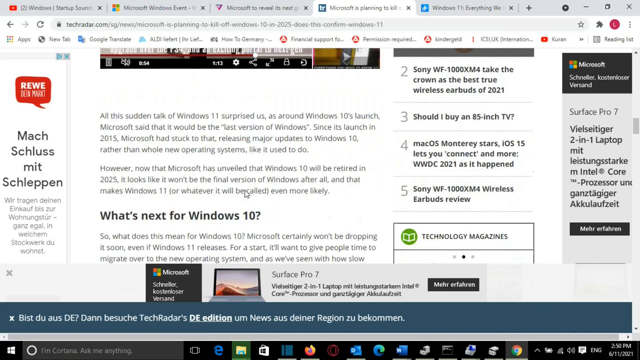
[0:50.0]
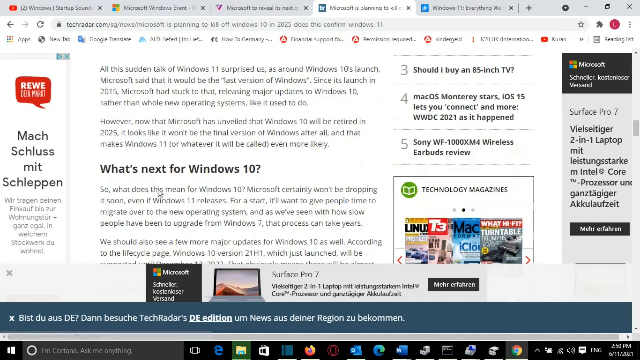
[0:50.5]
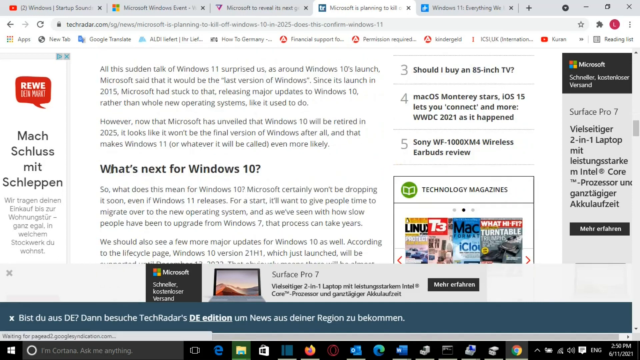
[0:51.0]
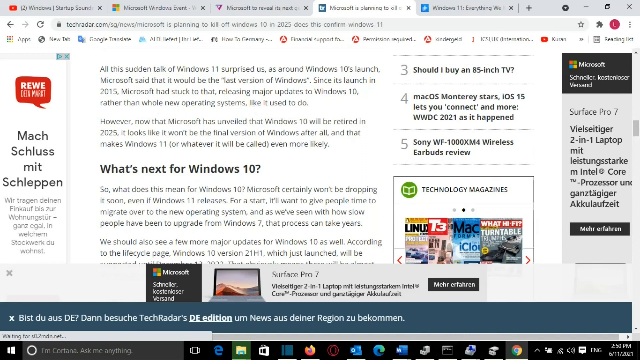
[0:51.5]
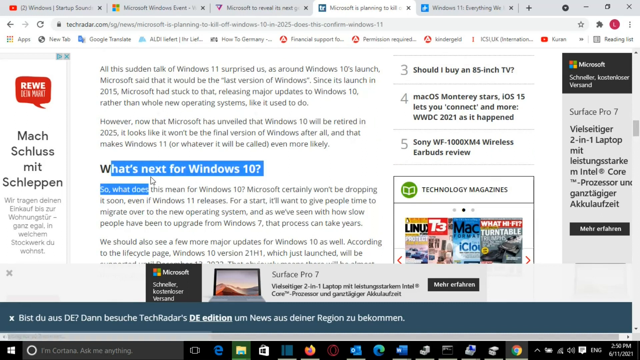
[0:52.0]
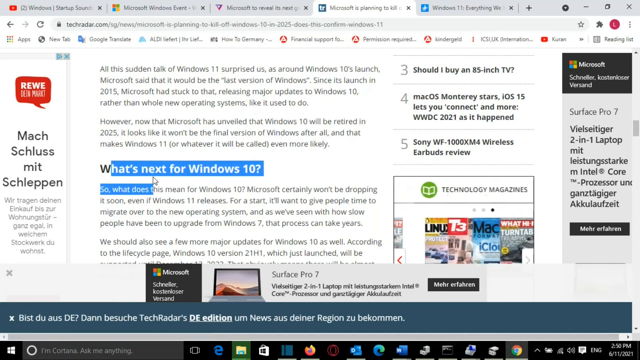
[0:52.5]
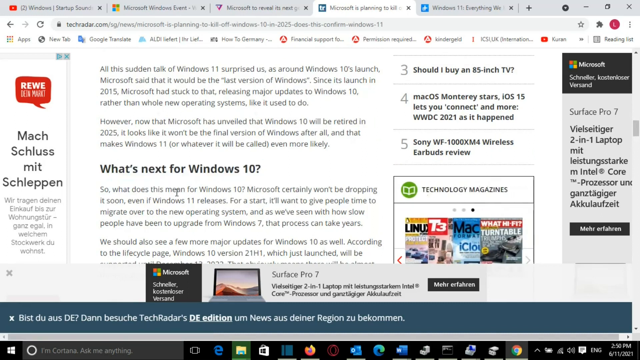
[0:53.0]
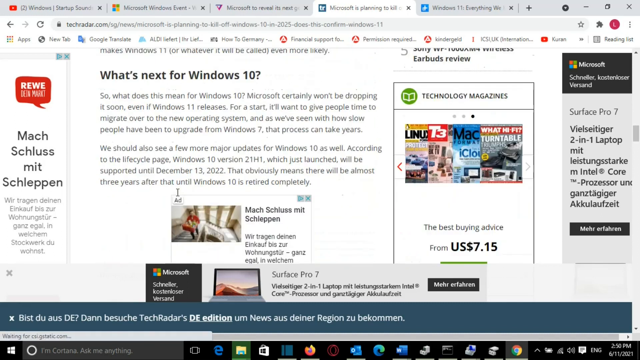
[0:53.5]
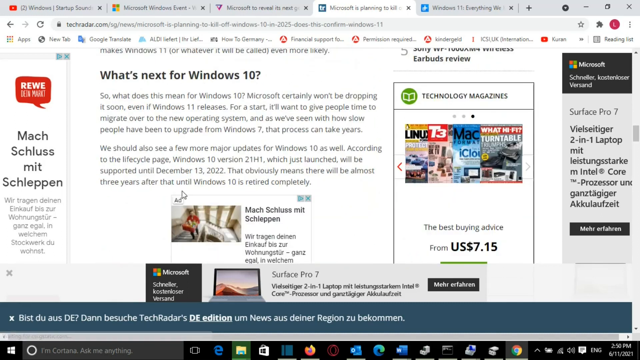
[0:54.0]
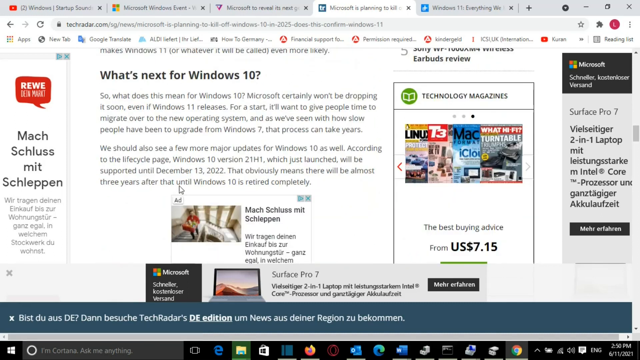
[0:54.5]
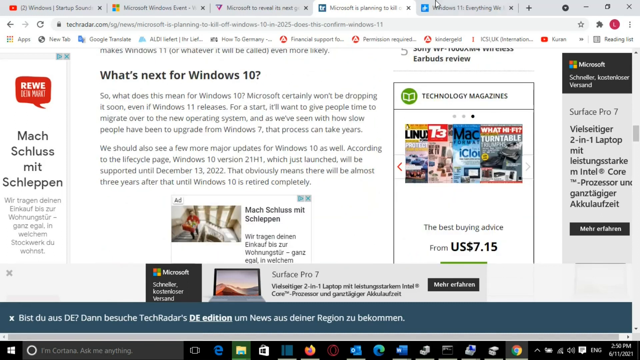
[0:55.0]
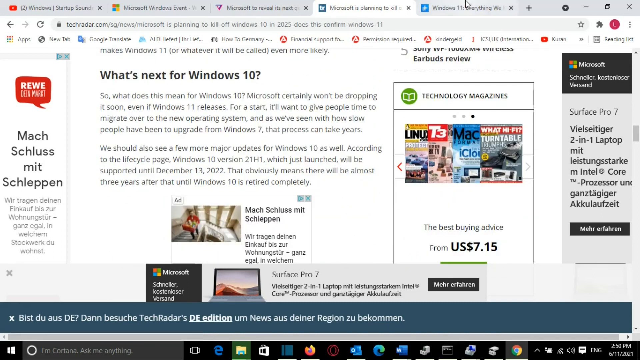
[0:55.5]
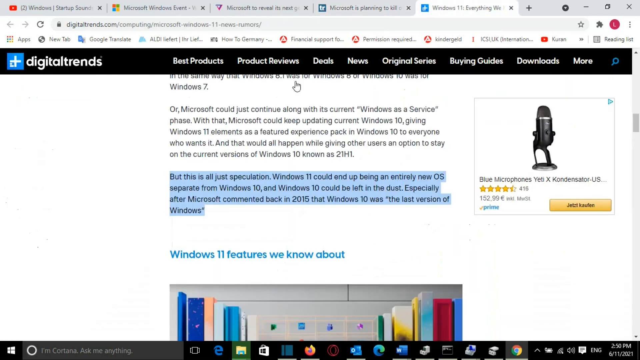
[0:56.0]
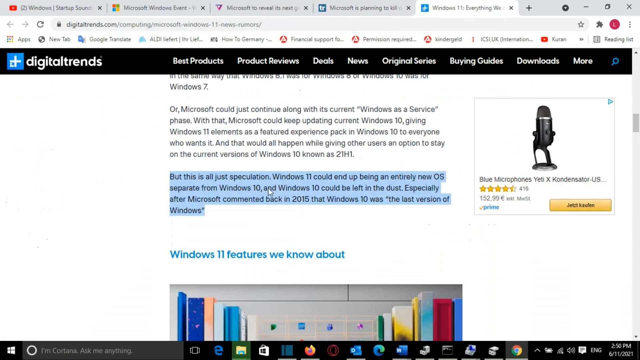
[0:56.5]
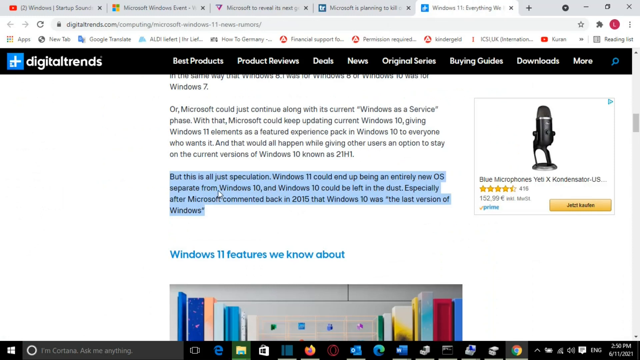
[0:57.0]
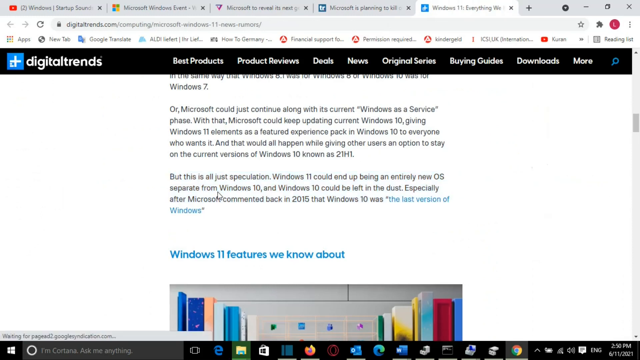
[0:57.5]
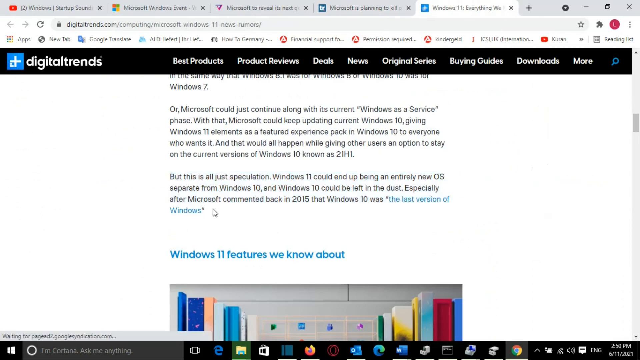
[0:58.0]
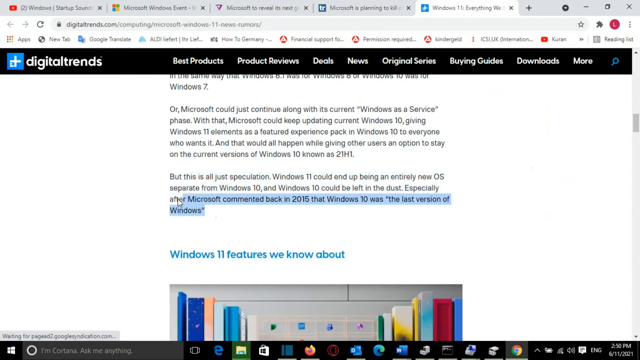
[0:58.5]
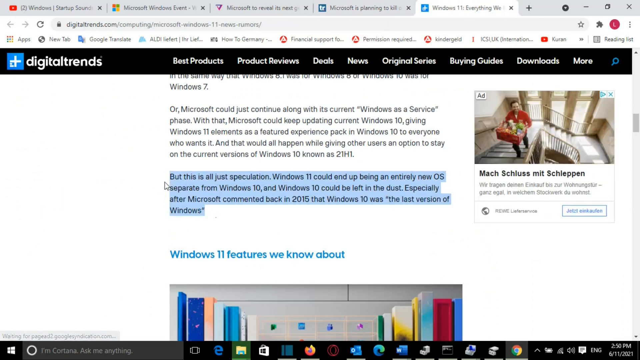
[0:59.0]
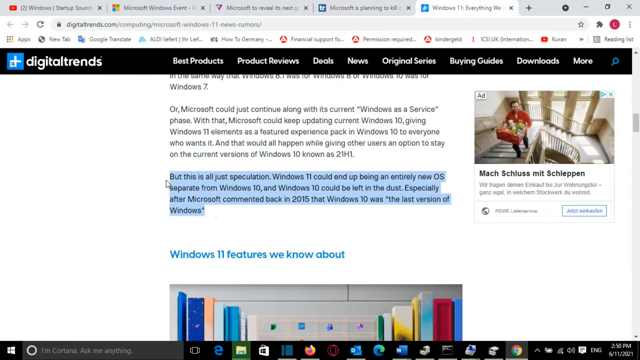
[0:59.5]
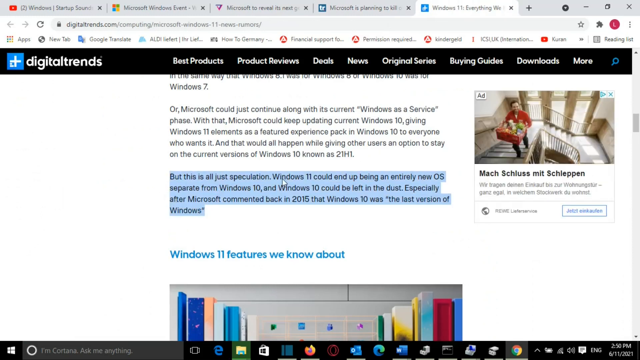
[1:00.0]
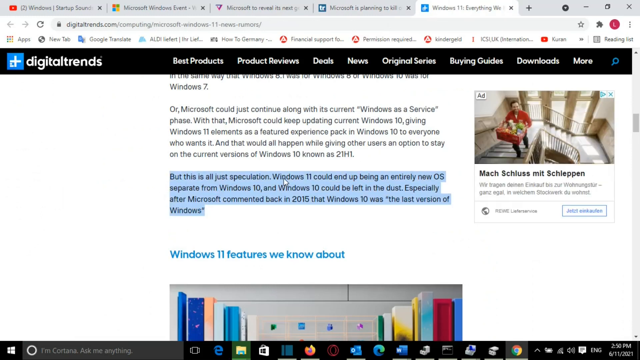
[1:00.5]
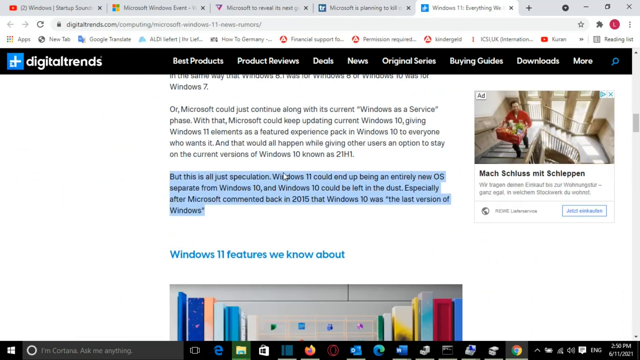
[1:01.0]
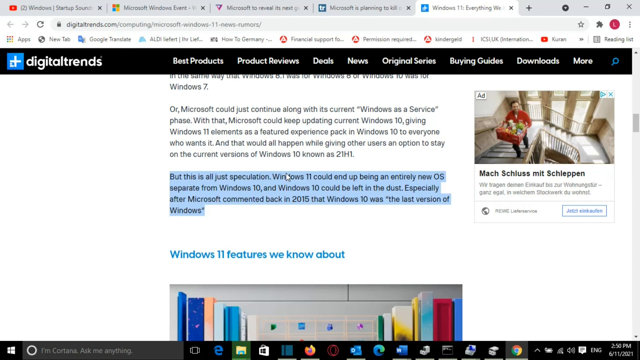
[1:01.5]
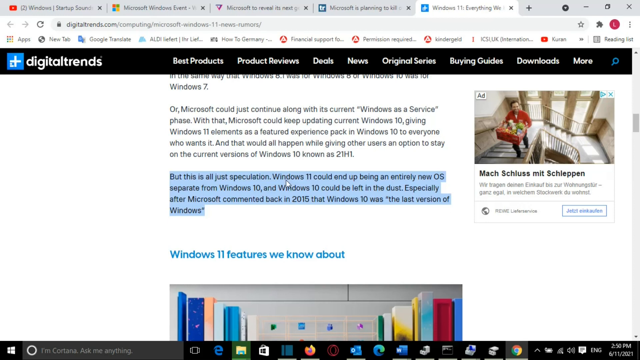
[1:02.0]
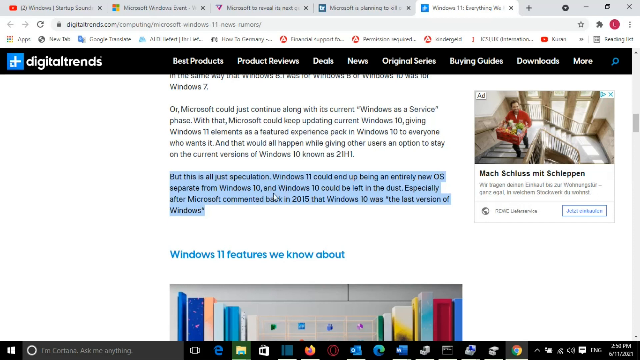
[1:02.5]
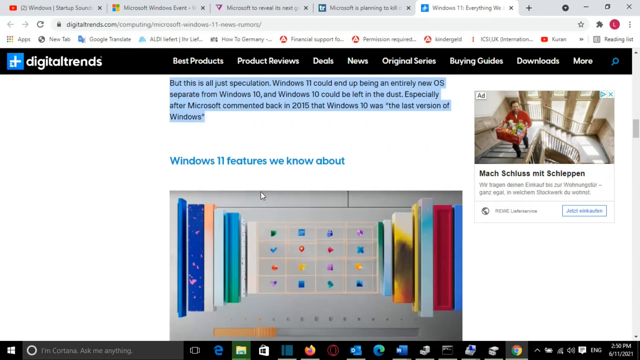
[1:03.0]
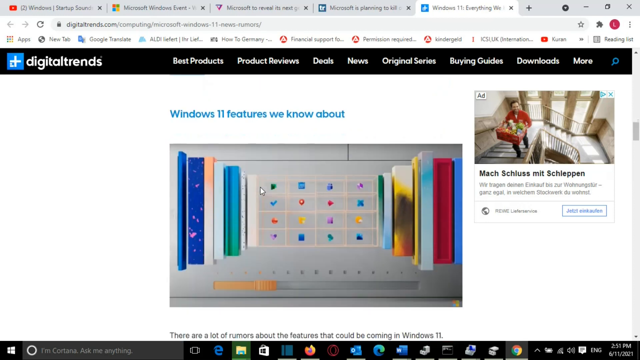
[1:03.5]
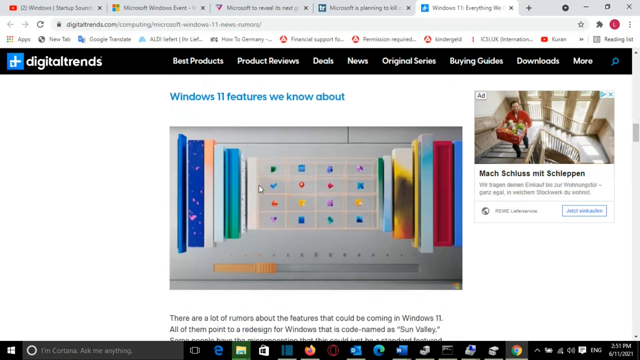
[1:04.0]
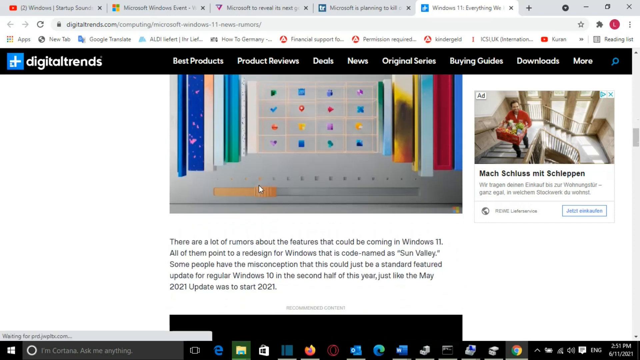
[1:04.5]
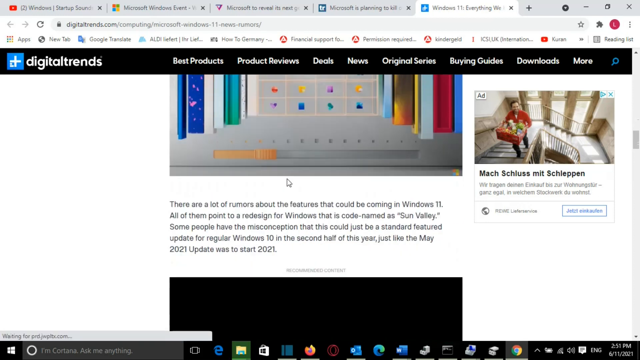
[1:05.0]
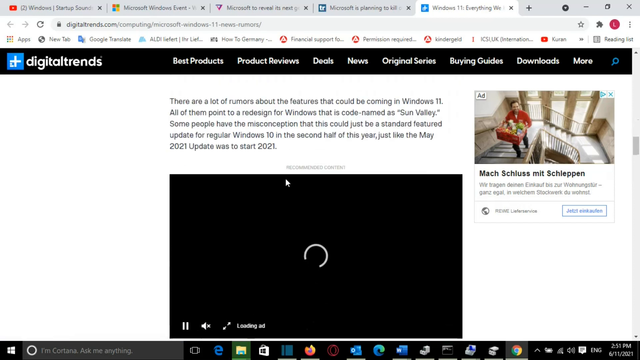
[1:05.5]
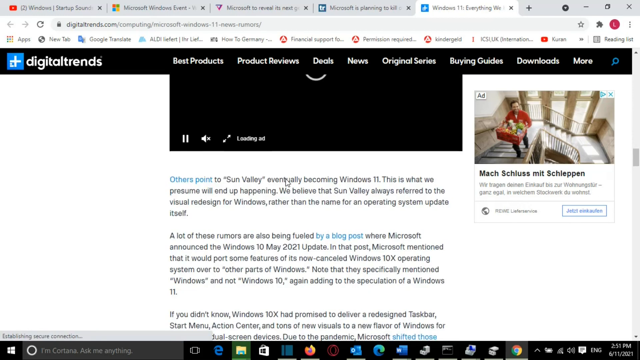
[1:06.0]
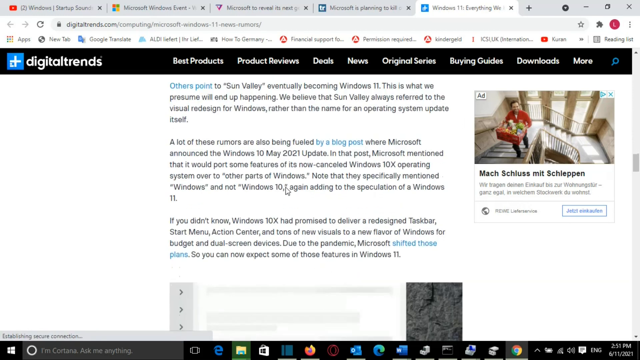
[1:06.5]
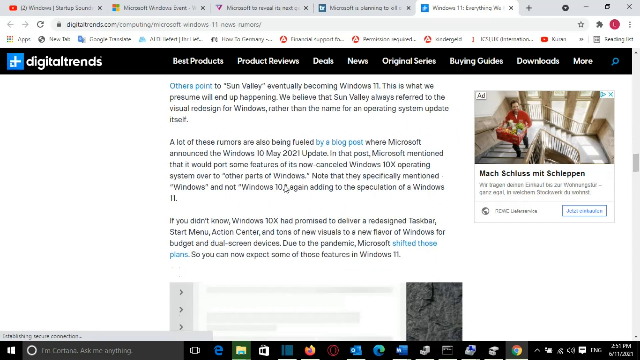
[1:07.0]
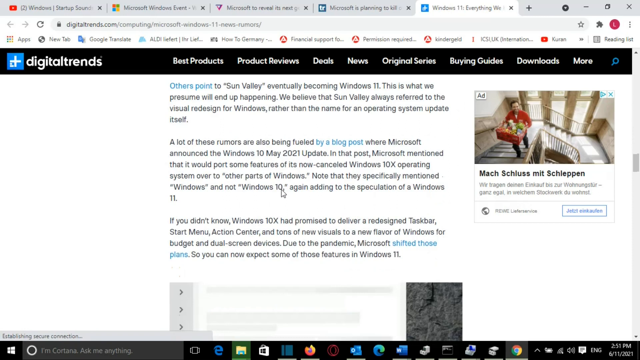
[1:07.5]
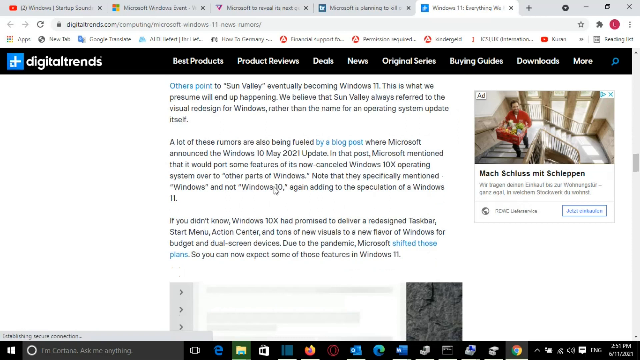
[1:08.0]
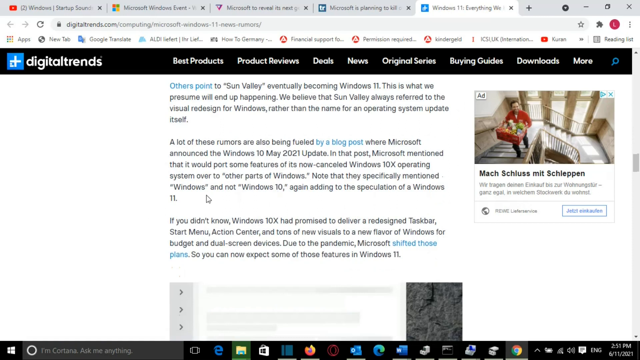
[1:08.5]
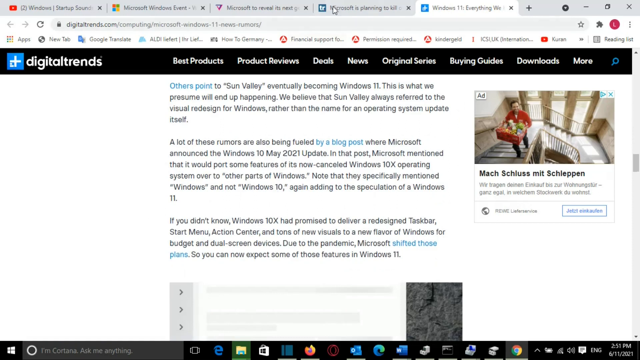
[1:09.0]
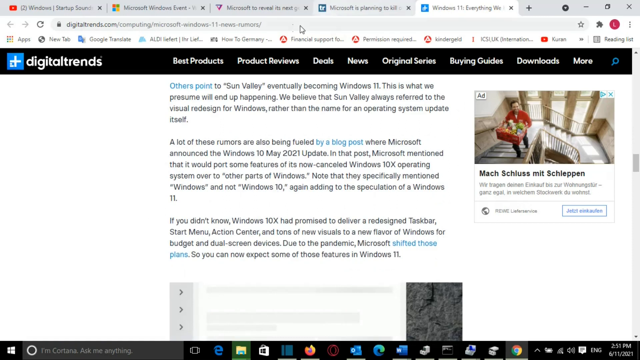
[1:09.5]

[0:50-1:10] A website called TechRadar.com is shown, and the cursor highlights the words "what's next for Windows 10." The page scrolls downward, and the cursor clicks on another tab toward the right, a website called digitaltrends.com. On this page, possibly an article, the cursor highlights text that says "but this is just all just speculation. Windows 11 could end up being an entirely new OS separate from Windows 10 and Windows 10 could be left in the dust, especially after Microsoft commented back in 2015 that Windows 10 was the last version of Windows." The page scrolls downward and keeps scrolling, then the cursor moves toward the top and clicks on another tab. The pages shown appear to be articles.